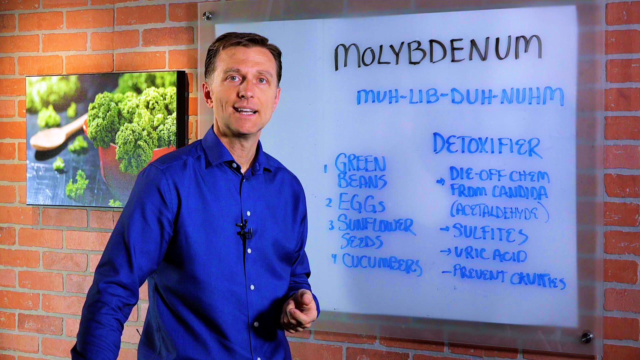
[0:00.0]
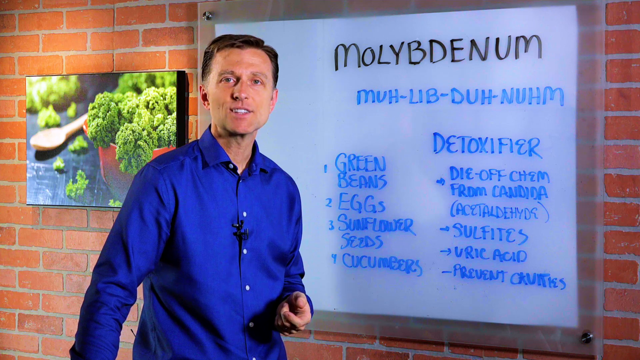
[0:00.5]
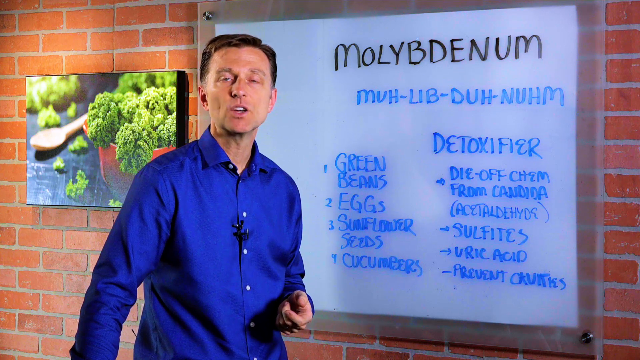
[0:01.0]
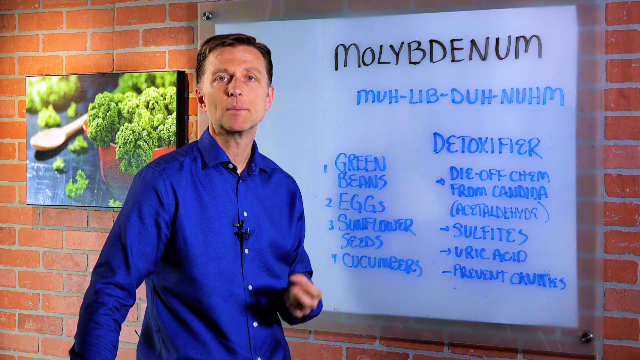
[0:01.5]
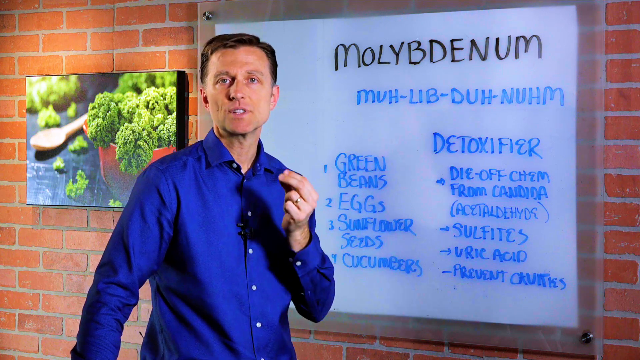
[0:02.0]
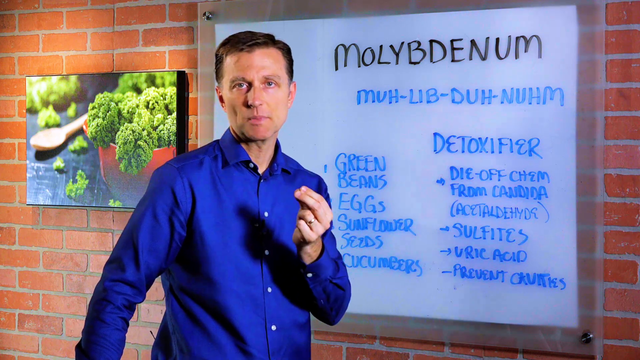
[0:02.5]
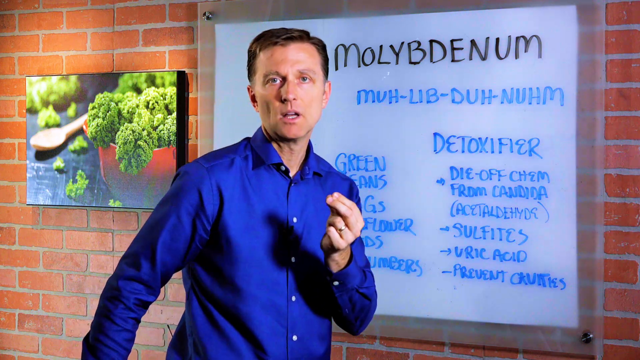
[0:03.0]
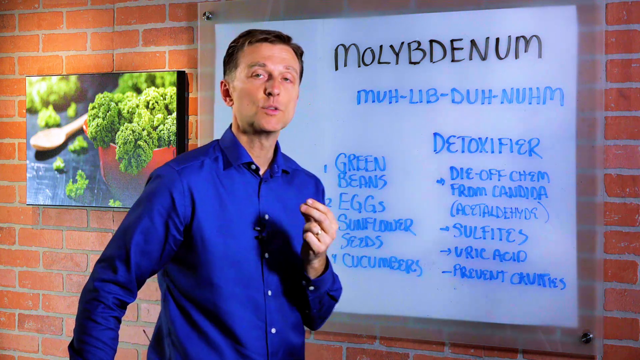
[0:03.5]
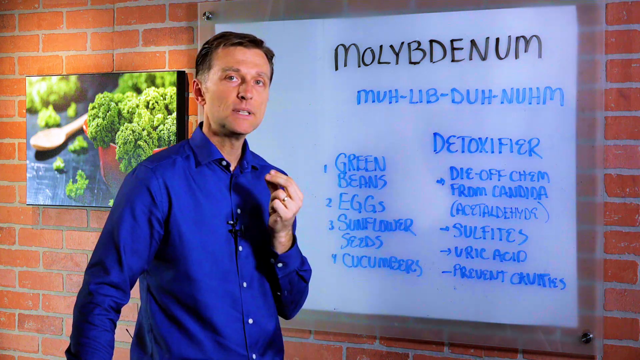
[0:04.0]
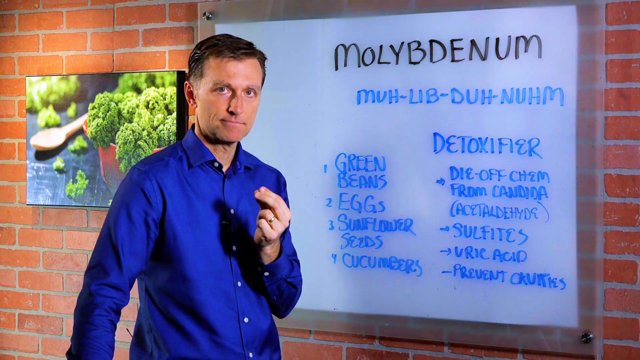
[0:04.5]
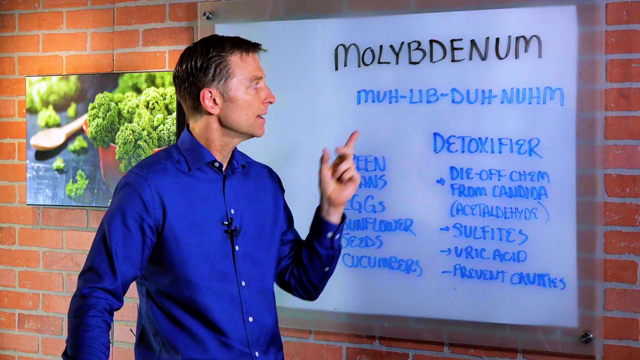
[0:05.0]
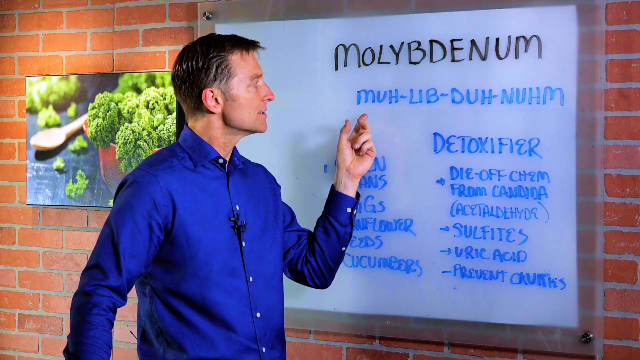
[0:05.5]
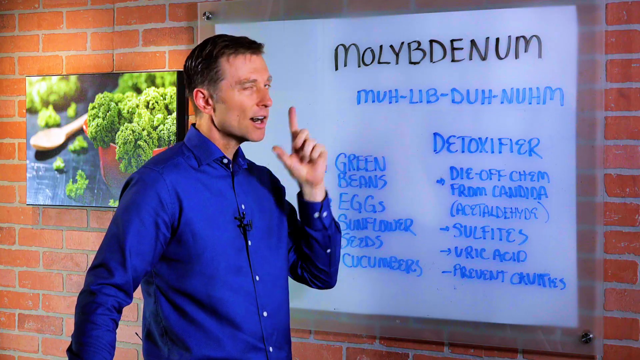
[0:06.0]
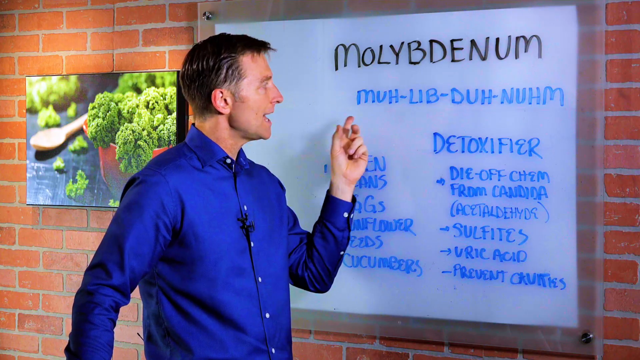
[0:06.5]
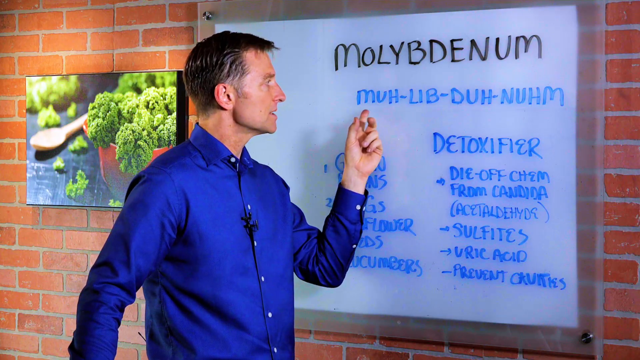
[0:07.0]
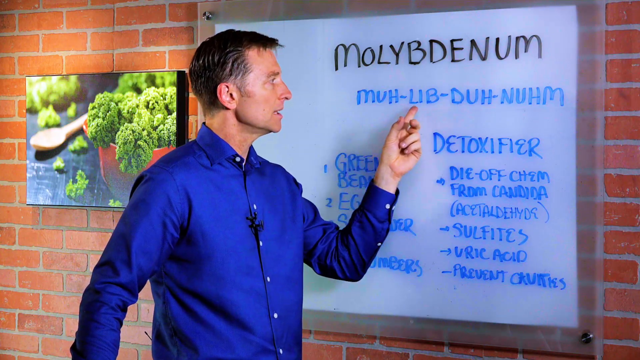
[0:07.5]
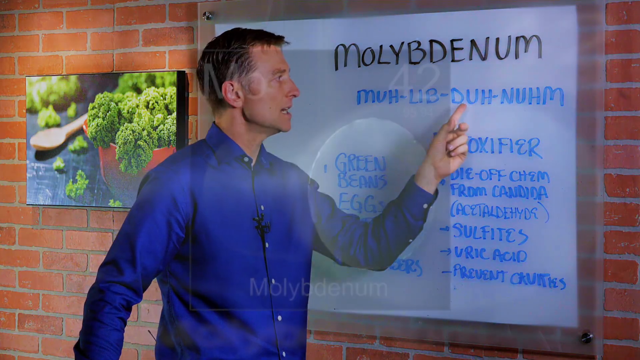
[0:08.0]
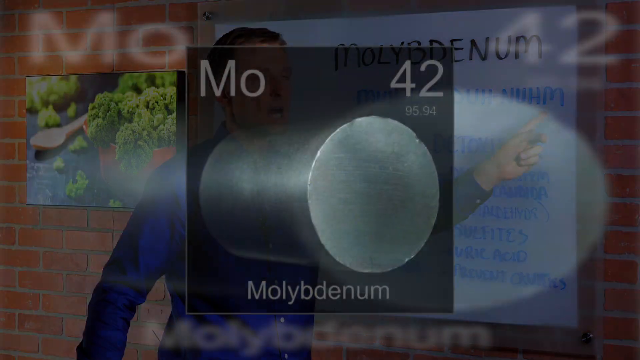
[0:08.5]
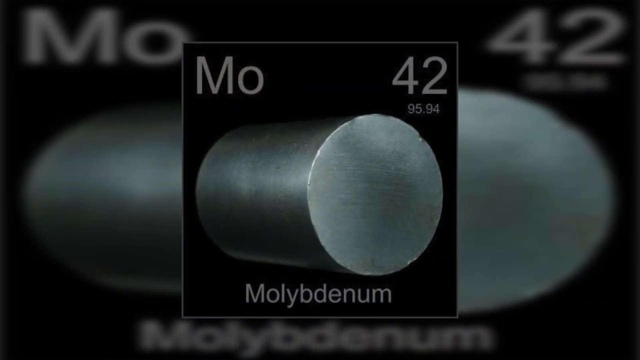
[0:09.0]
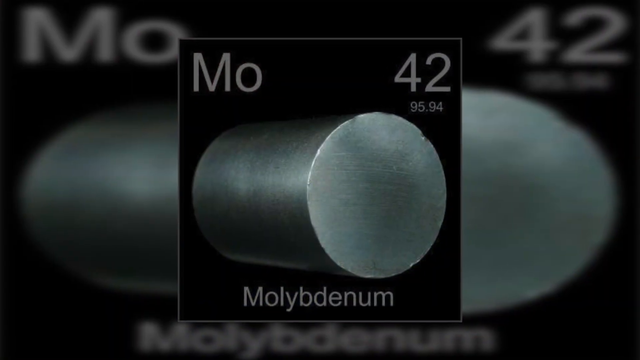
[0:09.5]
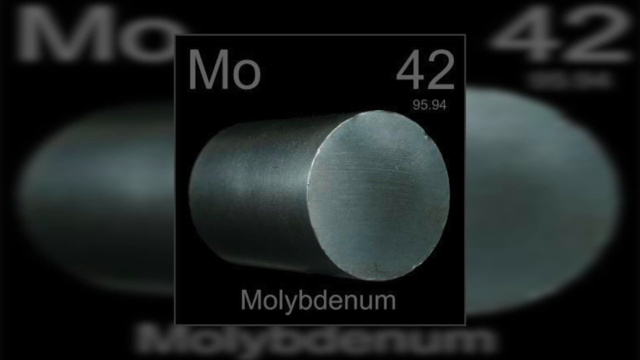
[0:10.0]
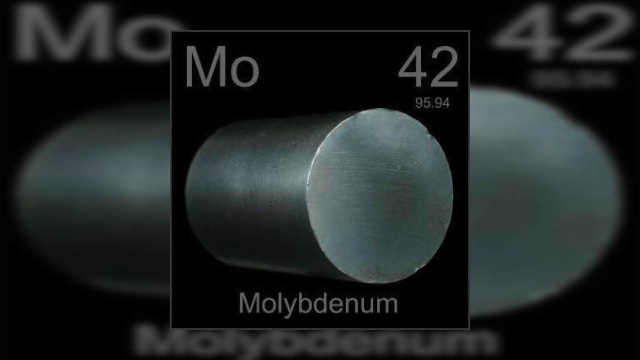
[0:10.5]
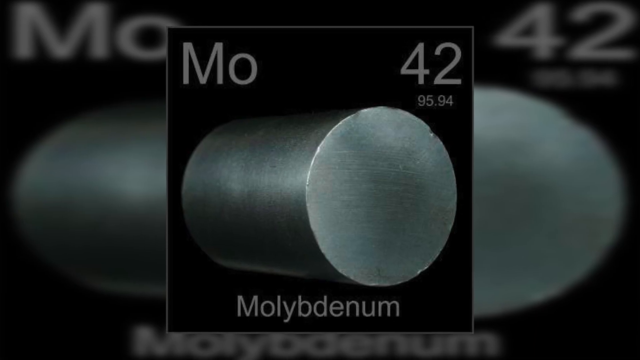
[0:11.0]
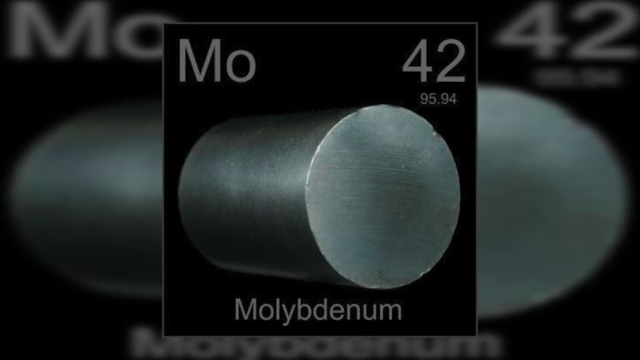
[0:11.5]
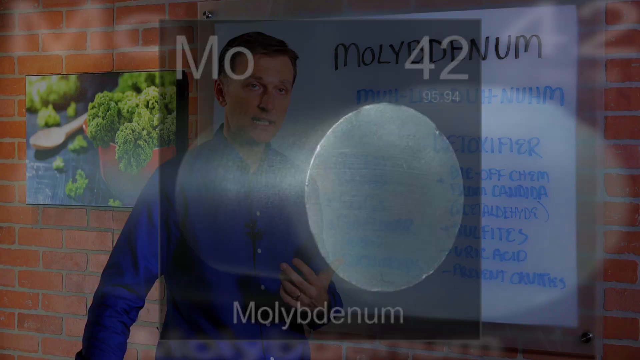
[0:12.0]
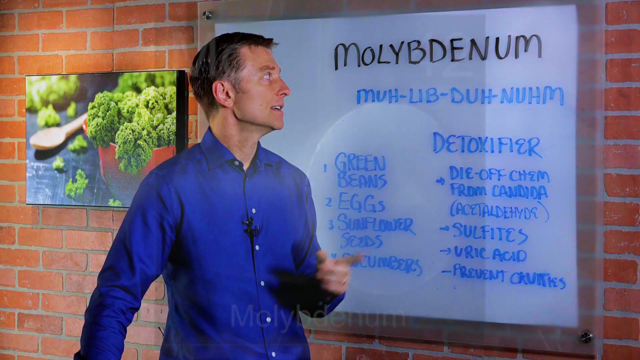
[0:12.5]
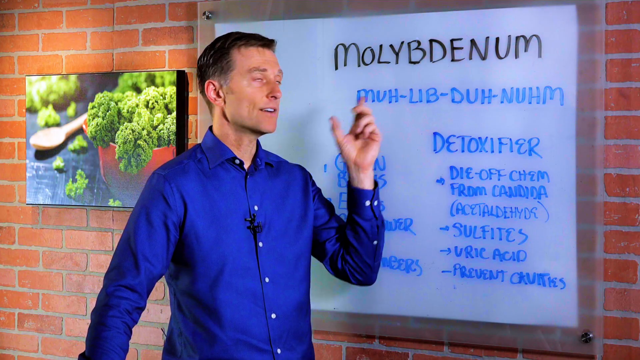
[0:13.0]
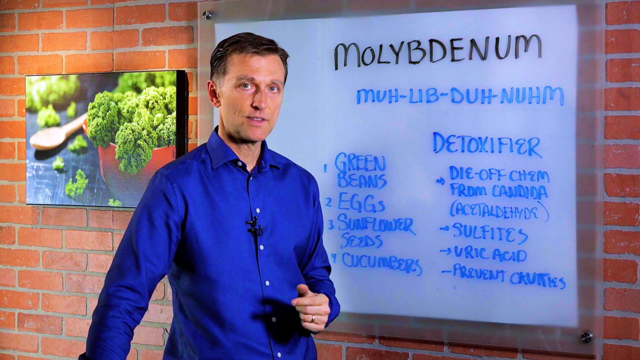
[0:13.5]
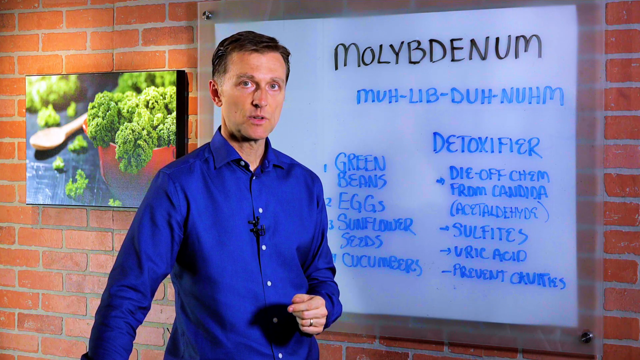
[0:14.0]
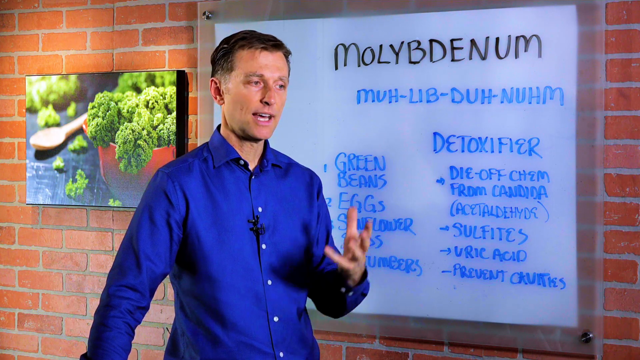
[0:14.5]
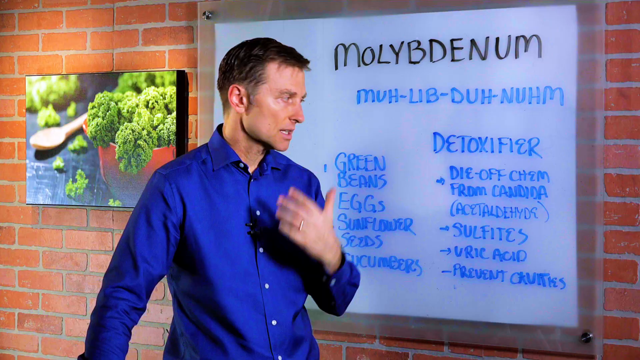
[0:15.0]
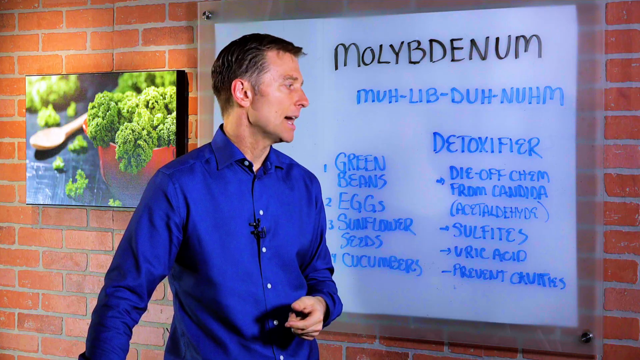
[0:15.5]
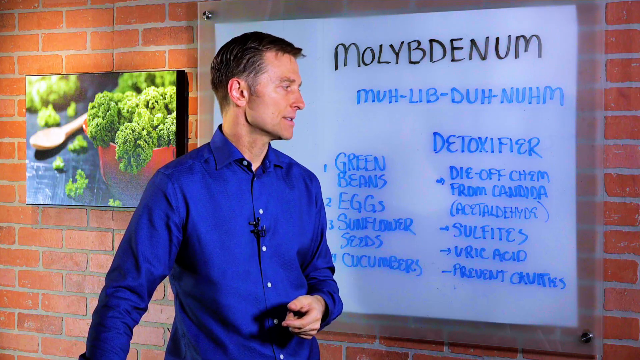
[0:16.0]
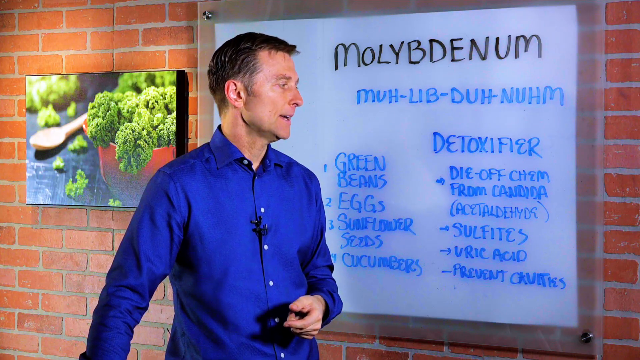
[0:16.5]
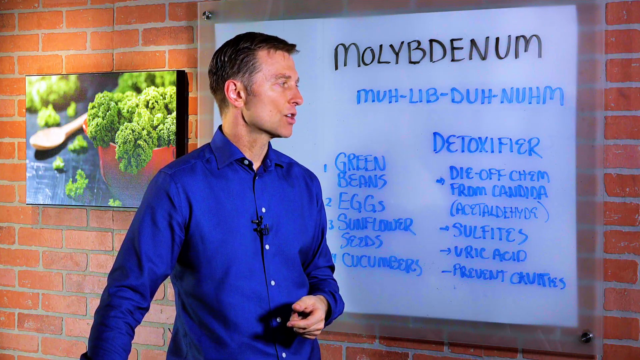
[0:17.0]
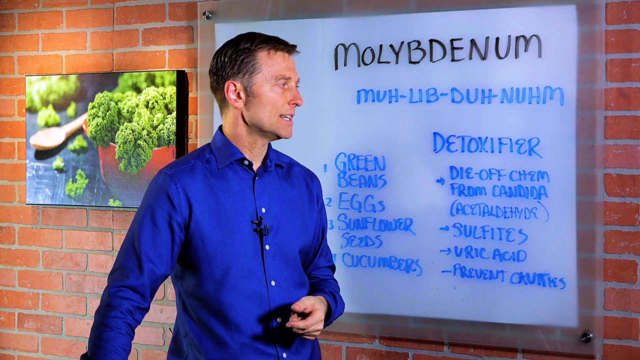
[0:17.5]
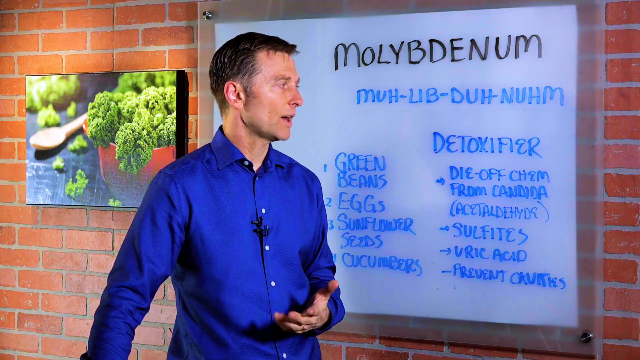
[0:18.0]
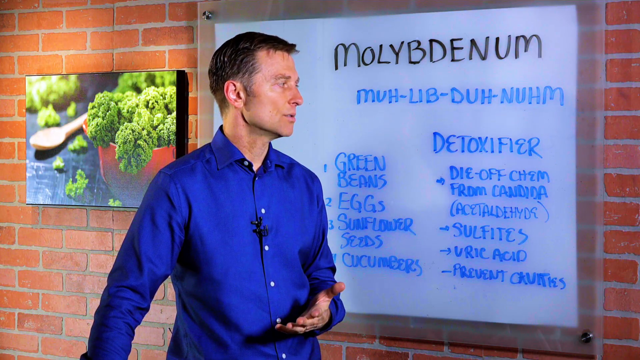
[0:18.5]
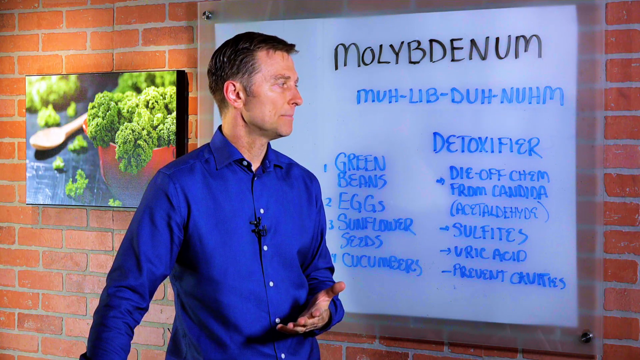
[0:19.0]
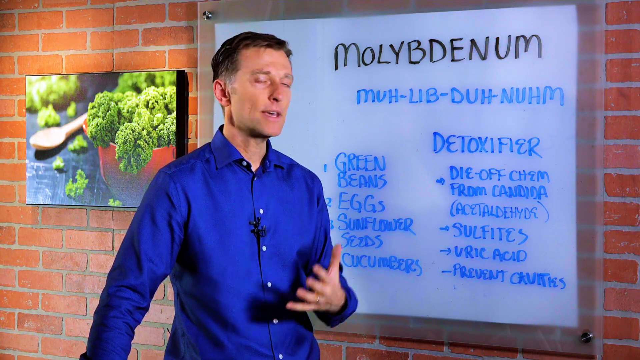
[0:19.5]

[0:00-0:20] In this educational video, a male in the middle of the screen wears a vibrant blue shirt and has a mic on the middle of his shirt. Behind him is a large whiteboard that seems to be covered with an overlay. On the left-hand side there is a picture of some vegetables in a bowl, with a wooden spoon to the left of it, and the background is a brick wall. On the right-hand side of the whiteboard or screen behind him is handwritten text: "MOLYBDENUM" in black, and underneath it the phonetic spelling "MUH-LIB-DUH-NUHM" in blue. Below that are two columns of text. The left column reads "1 green beans, 2 eggs, 3 sunflower seeds, 4 cucumbers." The right column reads "detoxifier" followed by points: "die off chem from candida," "ACETALDEHYDE," "sulfites," "uric acid" and "prevent cavities." With his left arm bent at an angle, the male points at his own body, then towards the screen behind him and towards the phonetic spelling of the word. The video then cuts to a new screen showing the element: a black square with white text reading "MO" in the top left, "42" in the top right, "95.94" underneath, and "Molybdenum" at the bottom. In the centre is a metal cylinder on its side. The background is the same image, distorted and blurred so that it fits the entire screen, and the image zooms in slowly. The video returns to the male talking to the camera. He gestures with his left hand and rotates his head to the left, towards the text, then makes open-hand gestures with his left hand, palm open and facing towards him as he speaks to the camera.